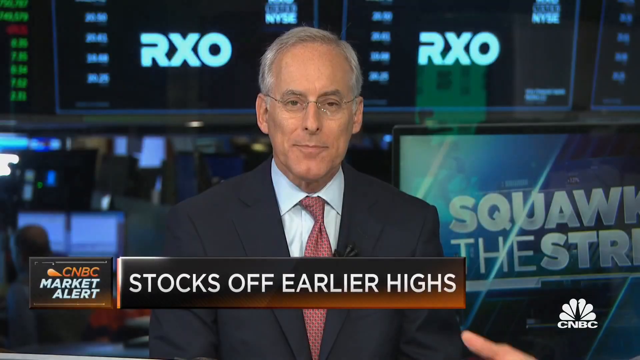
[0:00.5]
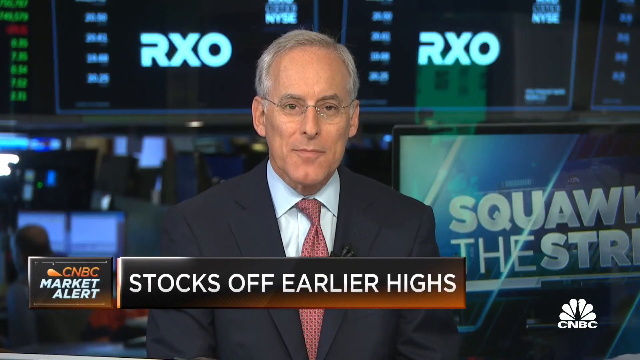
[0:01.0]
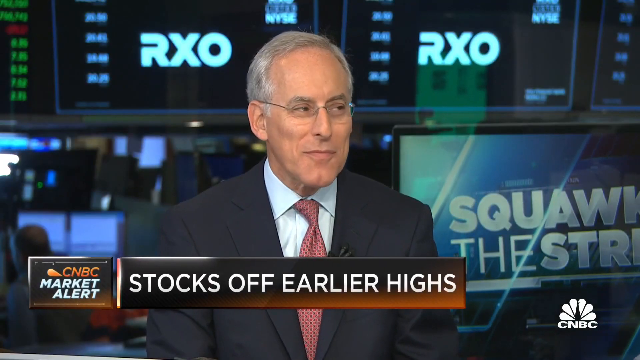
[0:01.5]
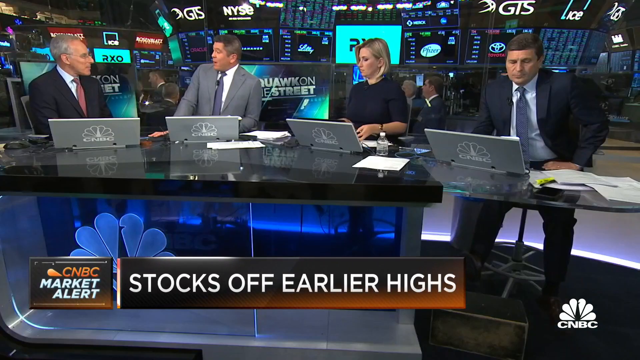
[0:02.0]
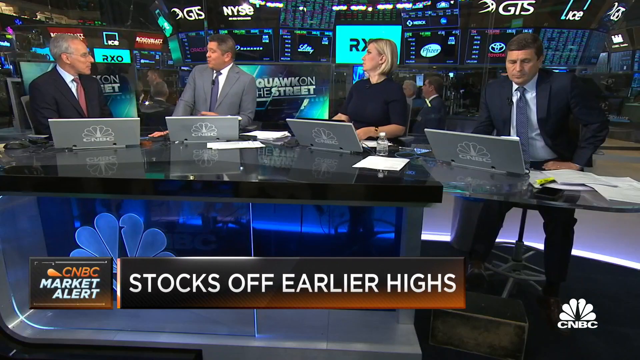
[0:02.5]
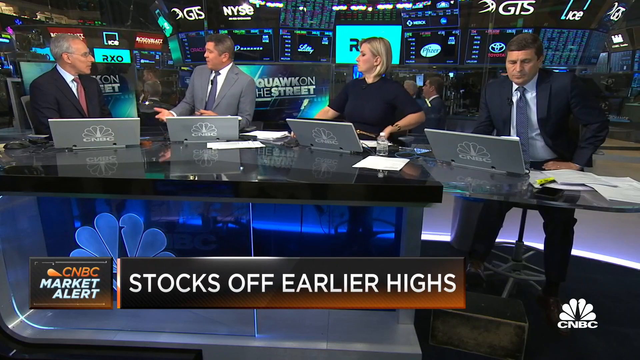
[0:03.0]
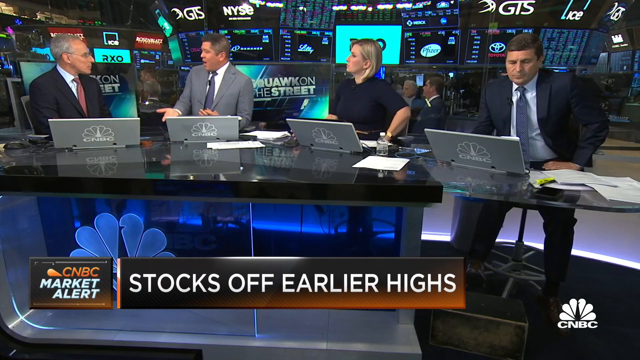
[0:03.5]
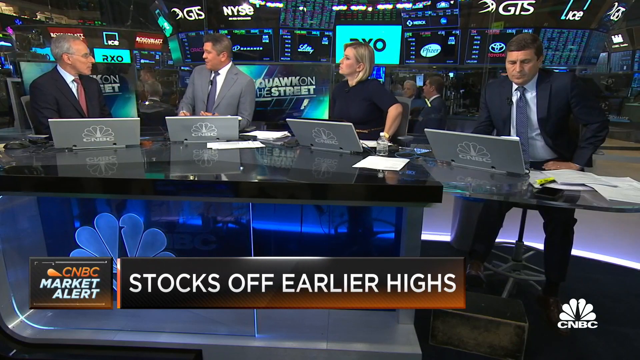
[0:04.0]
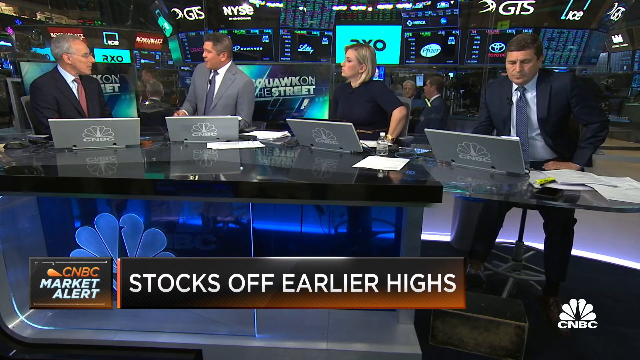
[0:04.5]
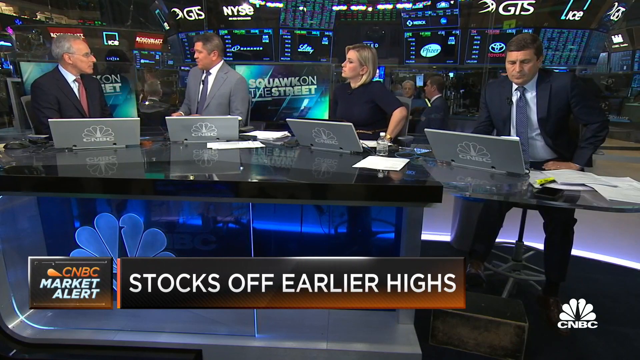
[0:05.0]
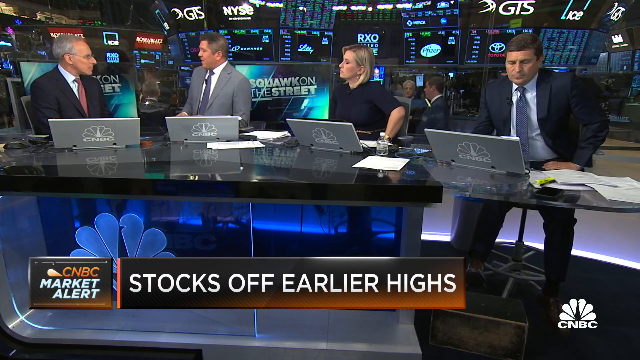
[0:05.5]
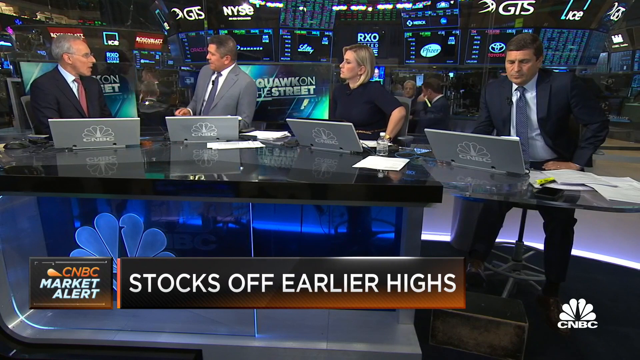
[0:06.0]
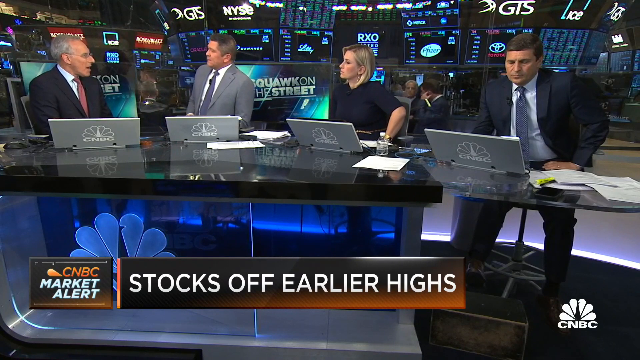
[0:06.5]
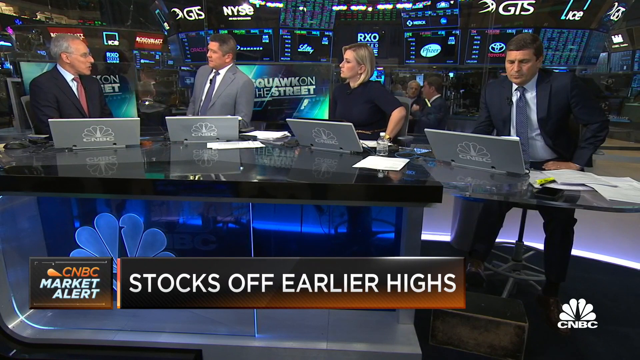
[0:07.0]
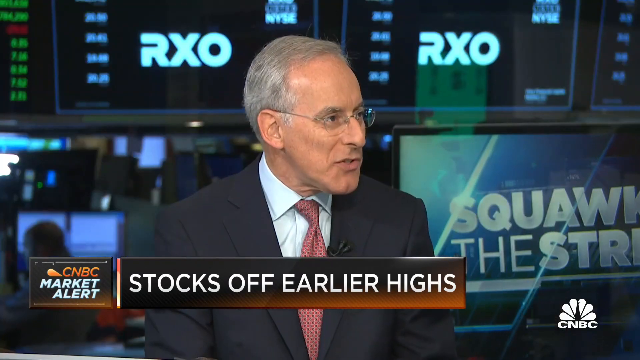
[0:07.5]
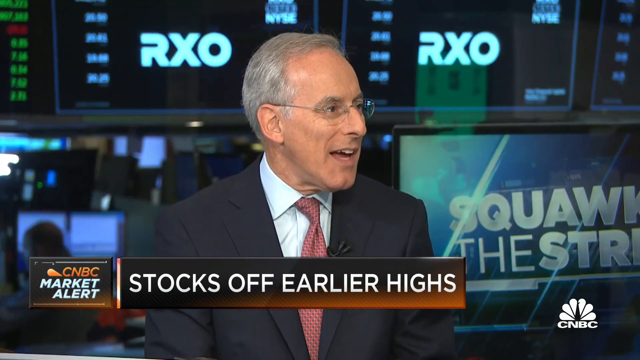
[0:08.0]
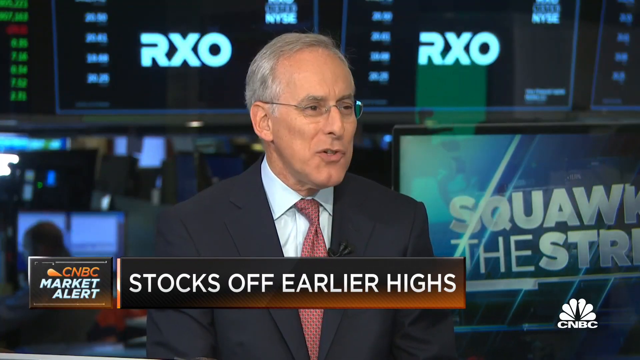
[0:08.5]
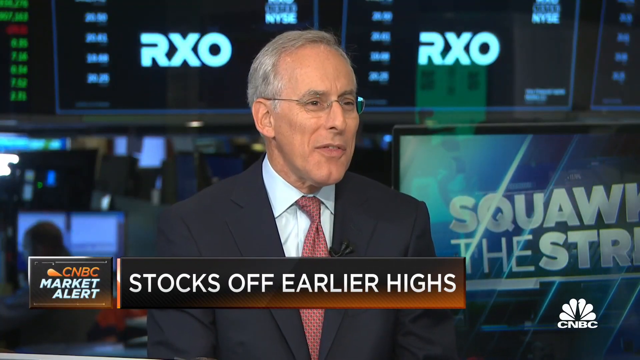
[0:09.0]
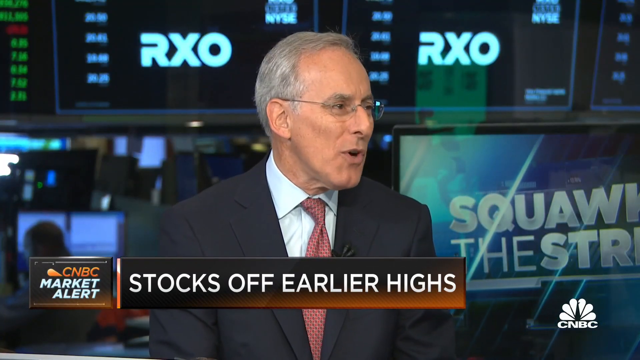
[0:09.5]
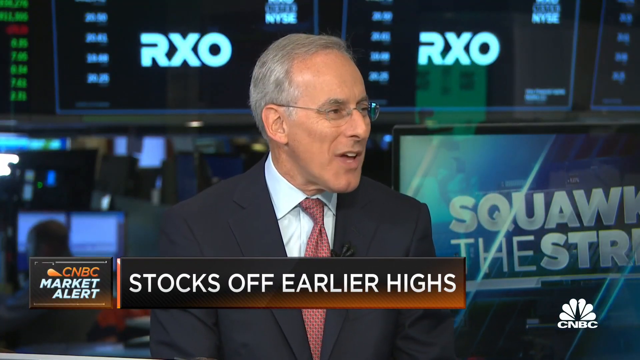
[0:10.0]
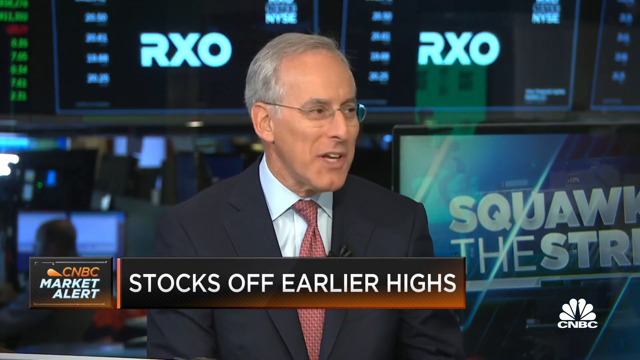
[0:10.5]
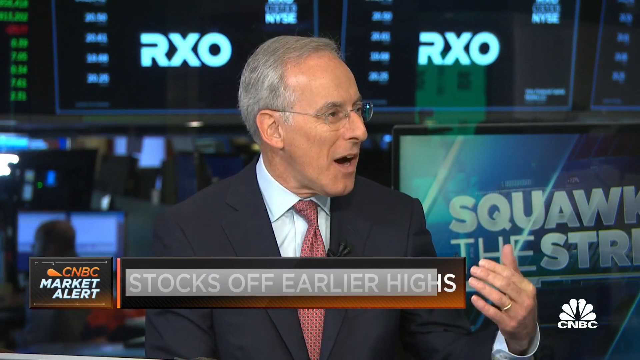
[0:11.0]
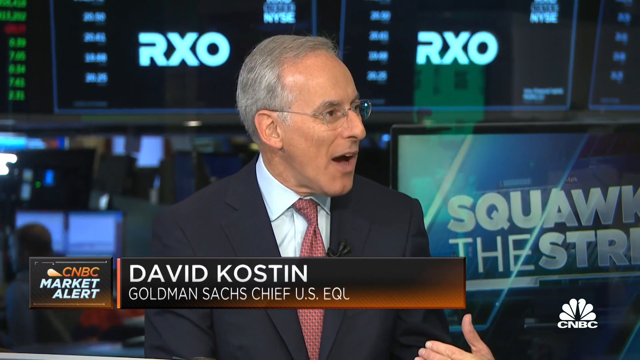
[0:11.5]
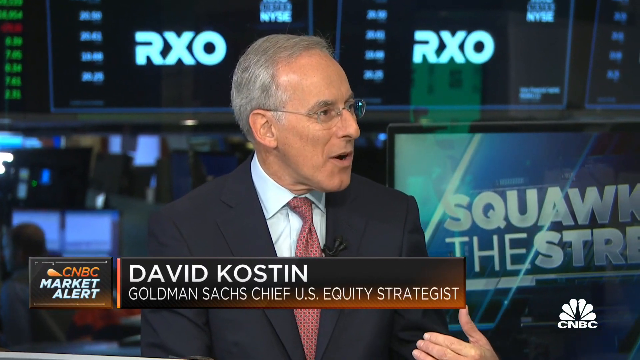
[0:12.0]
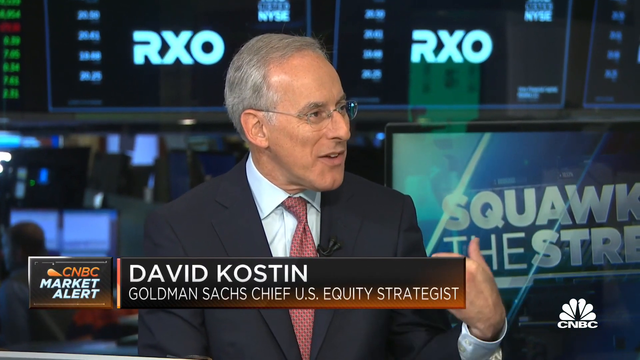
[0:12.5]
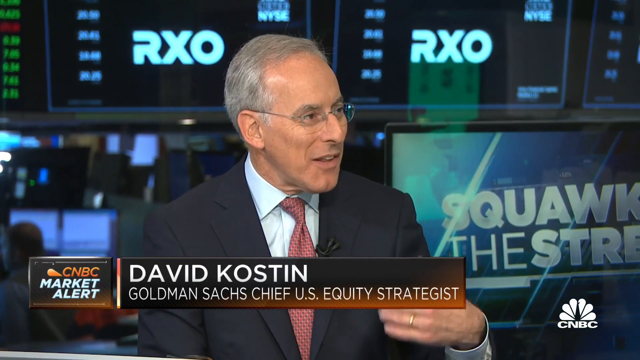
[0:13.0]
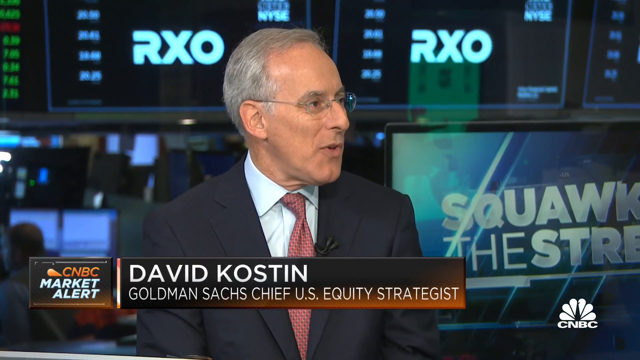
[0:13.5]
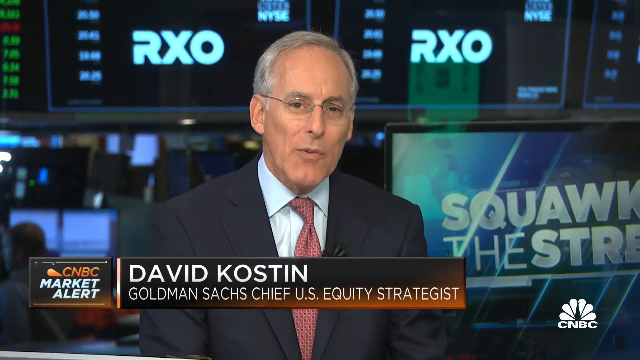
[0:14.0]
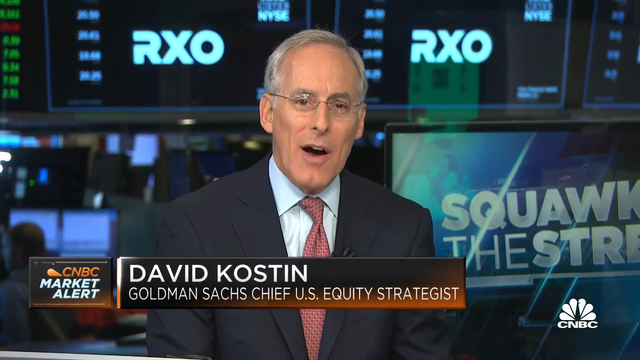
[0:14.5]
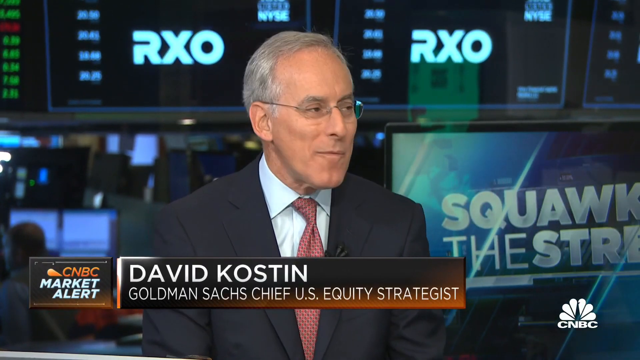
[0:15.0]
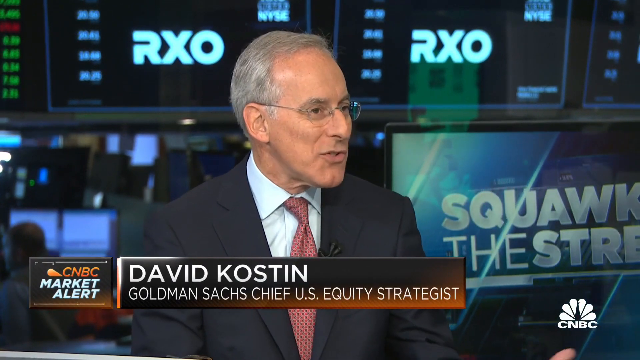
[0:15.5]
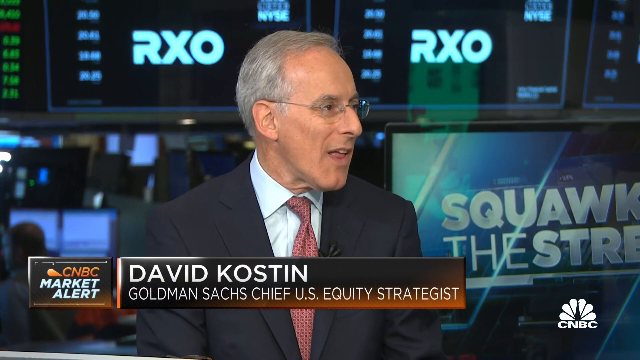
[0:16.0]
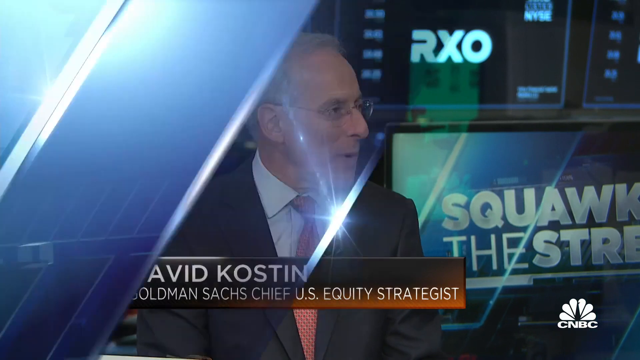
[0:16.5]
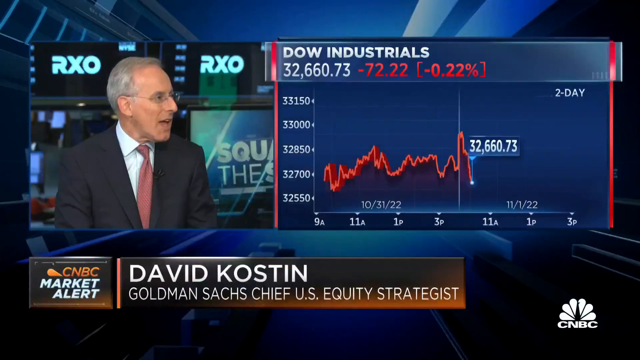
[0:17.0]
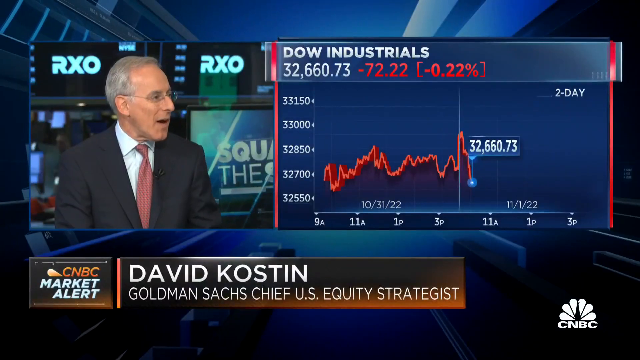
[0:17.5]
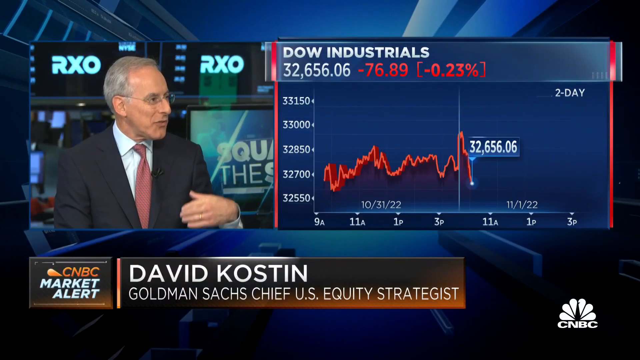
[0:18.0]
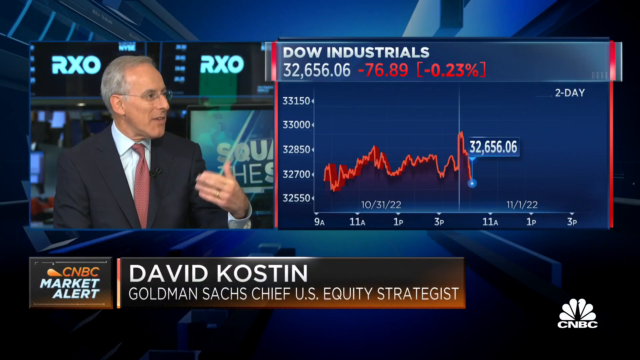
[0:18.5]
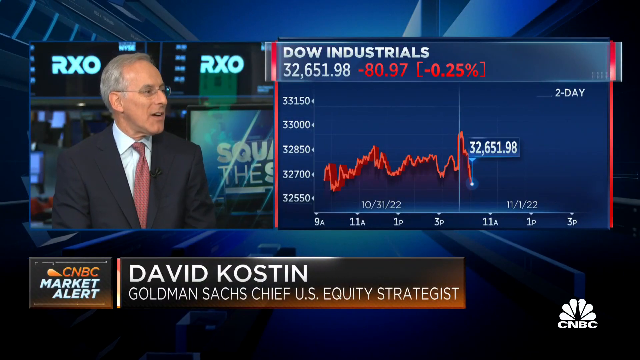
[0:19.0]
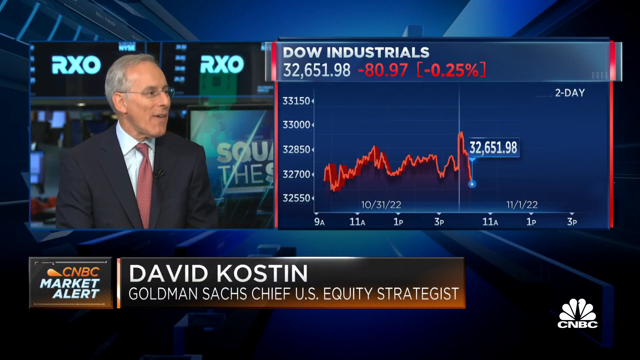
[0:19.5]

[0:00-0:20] An older man who looks around 60 wears a black blazer, white shirt, red tie and glasses. He is part of a CNBC panel of four people, three men and a woman, discussing the stock market. He is identified as David Kostin, Goldman Sachs Chief U.S. Equity Strategist. On-screen text indicates that the Dow is down, at least pre-market, on a day in 2022, and there is a market alert. The segment covers the movement between October 31st and November 1st, 2022. Many monitors are in the background, with many people on computers, probably also monitoring the stock market. All the men wear suits, and the woman appears to wear a blue dress.